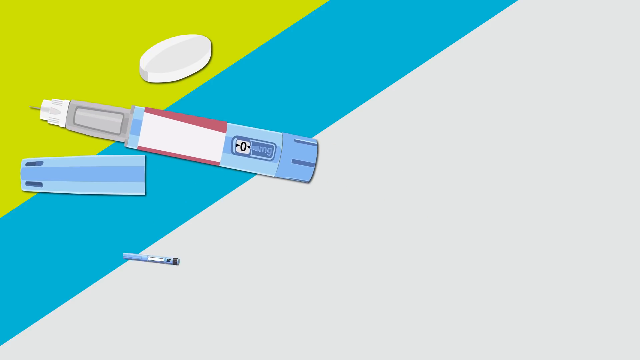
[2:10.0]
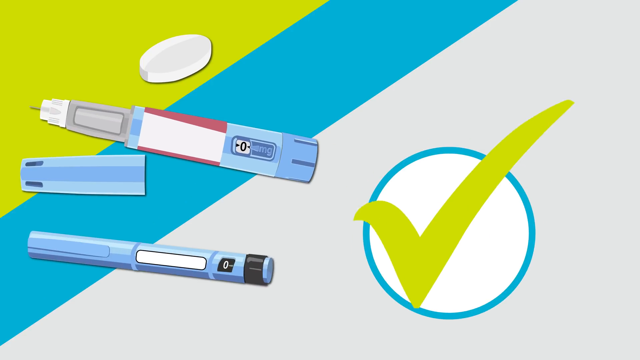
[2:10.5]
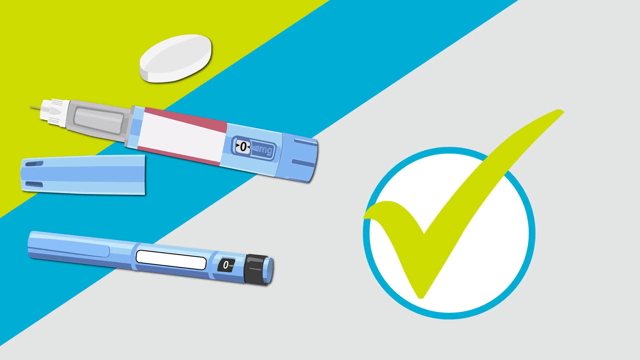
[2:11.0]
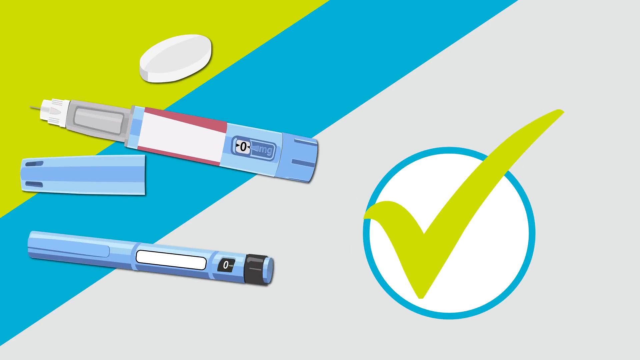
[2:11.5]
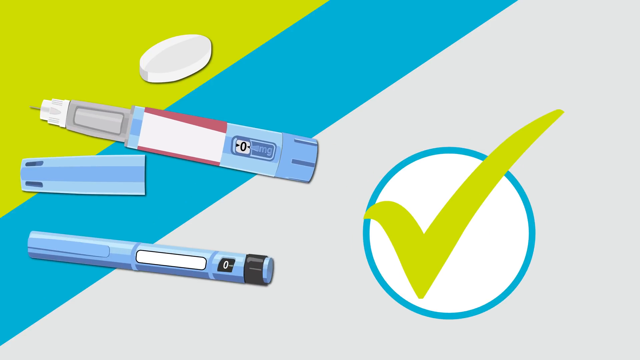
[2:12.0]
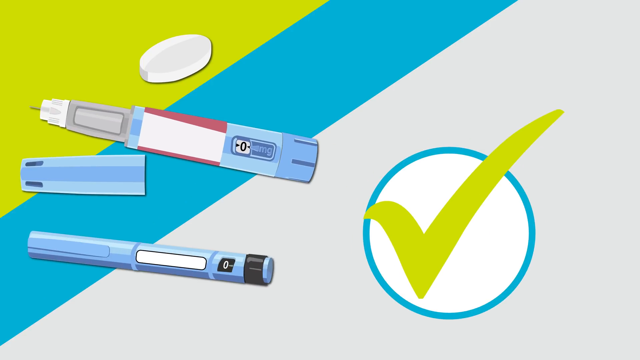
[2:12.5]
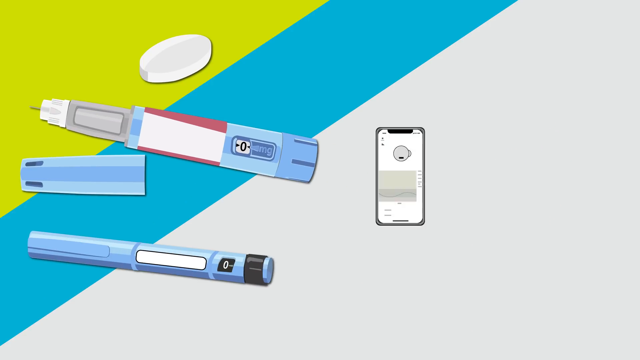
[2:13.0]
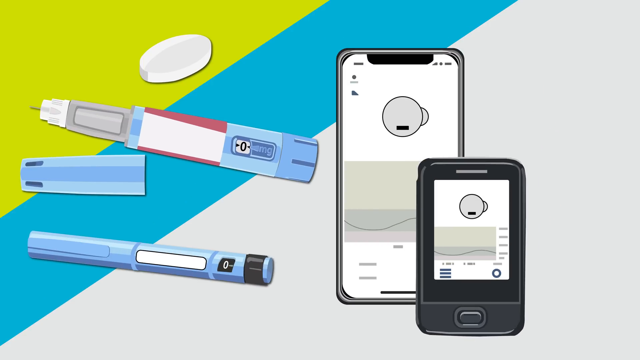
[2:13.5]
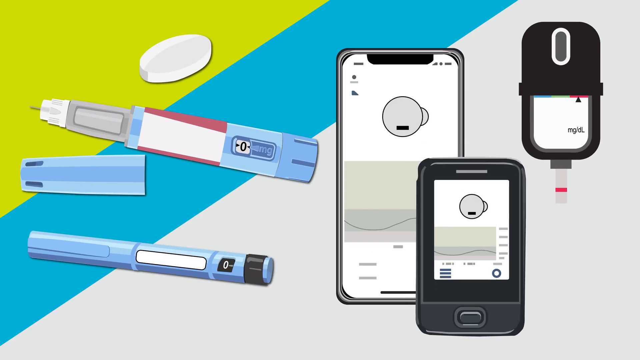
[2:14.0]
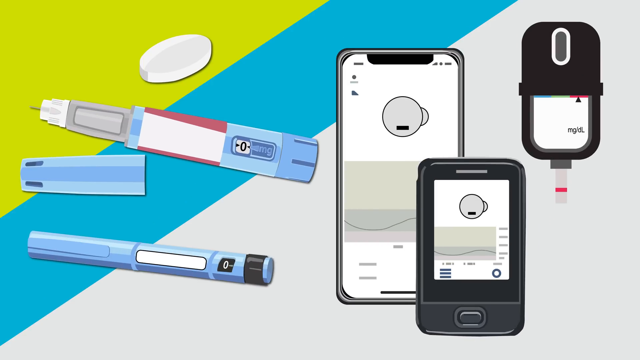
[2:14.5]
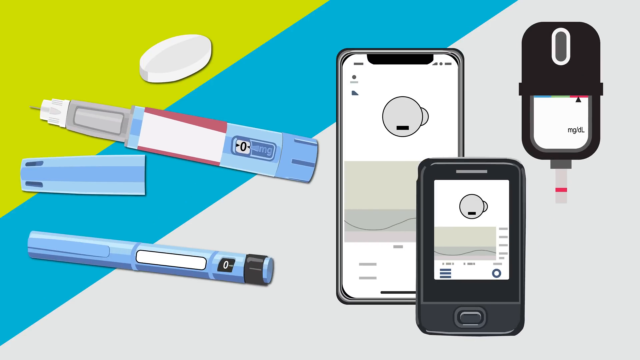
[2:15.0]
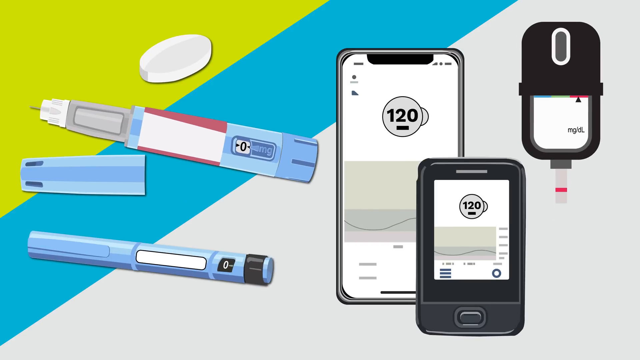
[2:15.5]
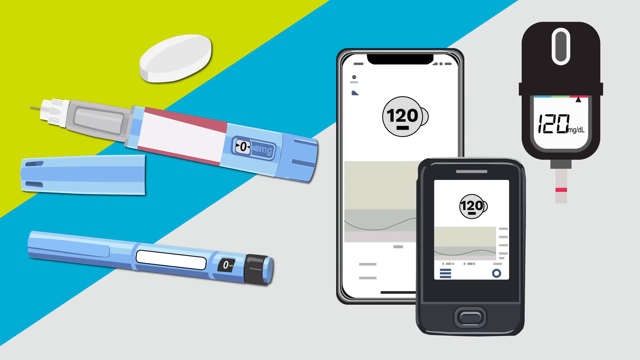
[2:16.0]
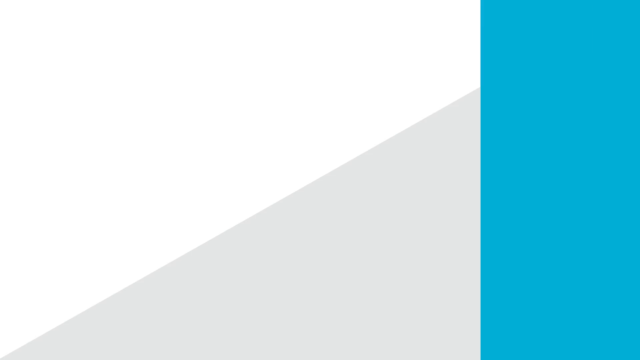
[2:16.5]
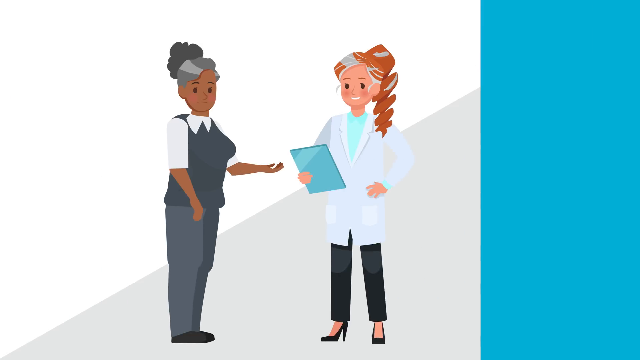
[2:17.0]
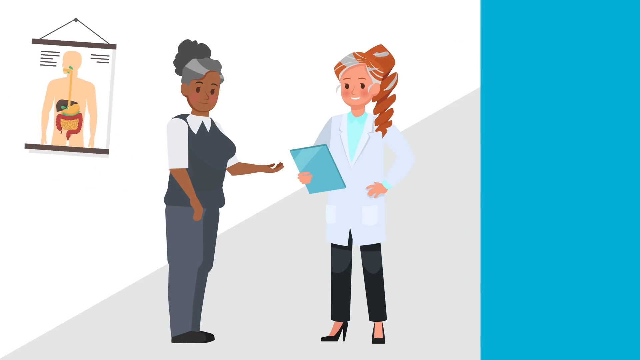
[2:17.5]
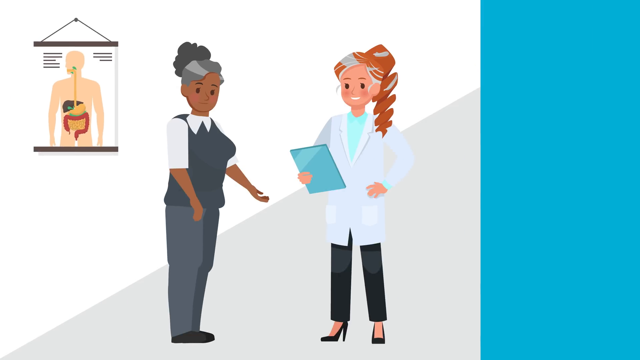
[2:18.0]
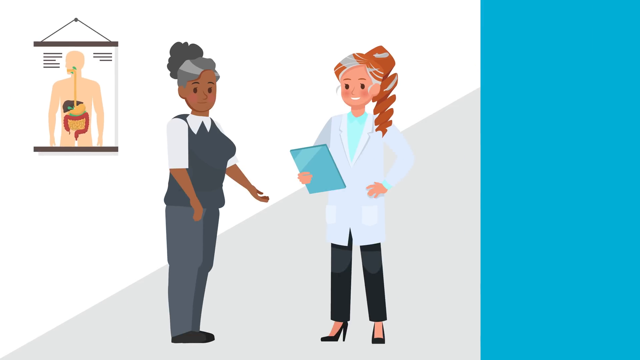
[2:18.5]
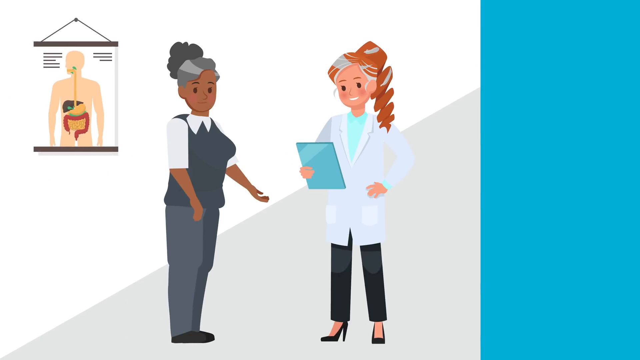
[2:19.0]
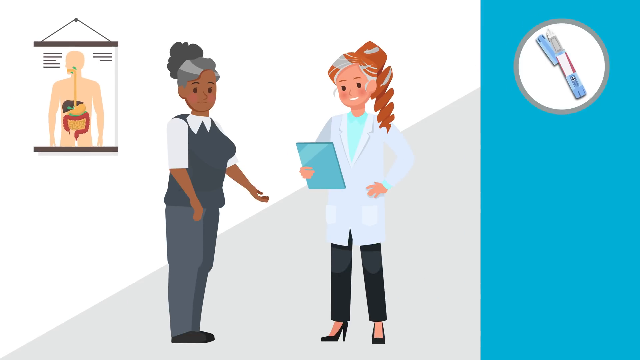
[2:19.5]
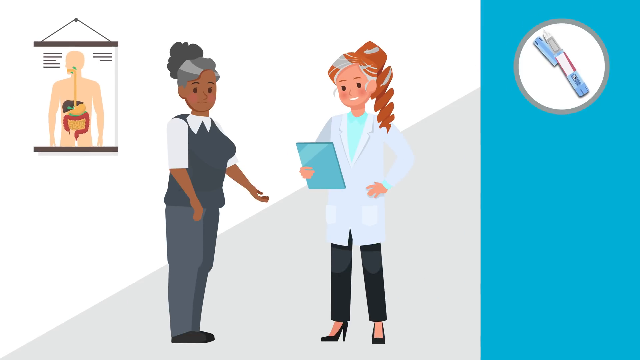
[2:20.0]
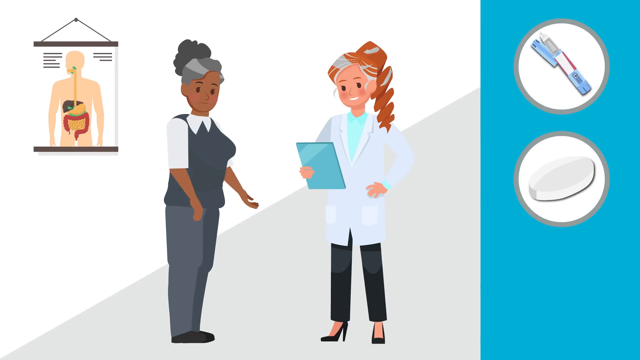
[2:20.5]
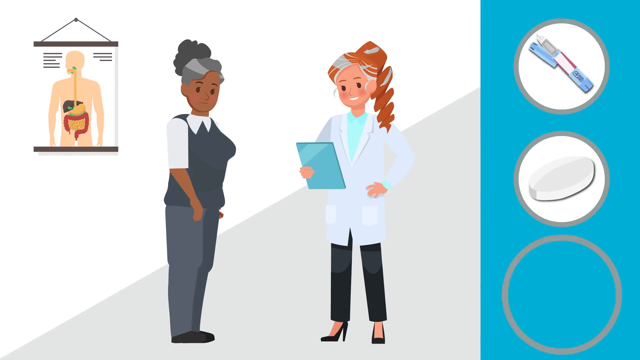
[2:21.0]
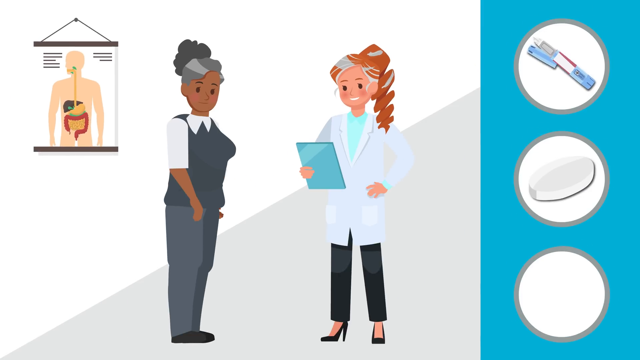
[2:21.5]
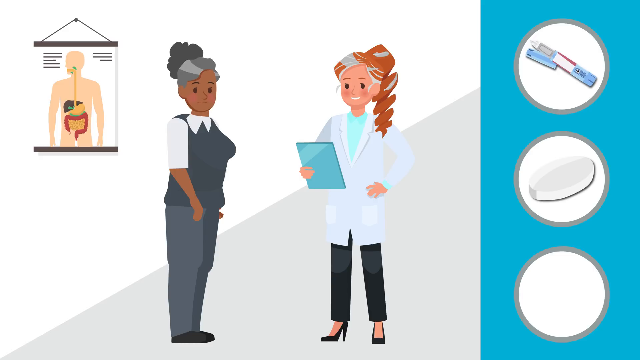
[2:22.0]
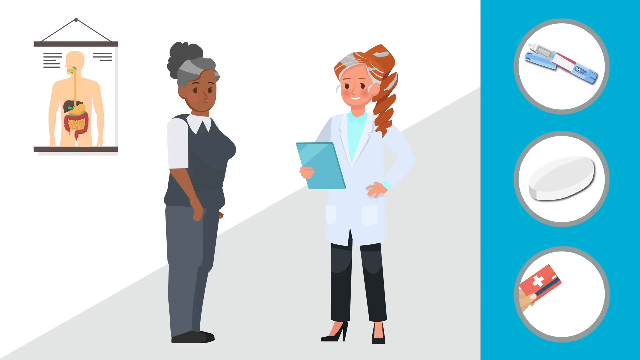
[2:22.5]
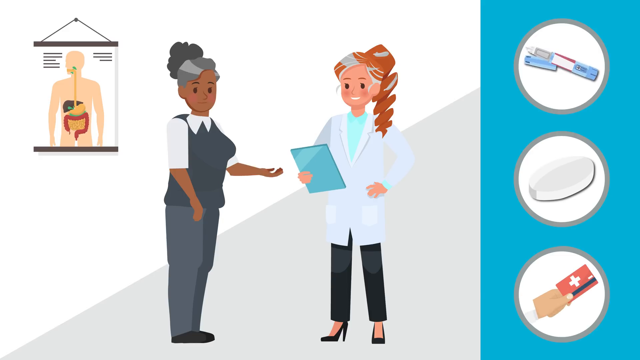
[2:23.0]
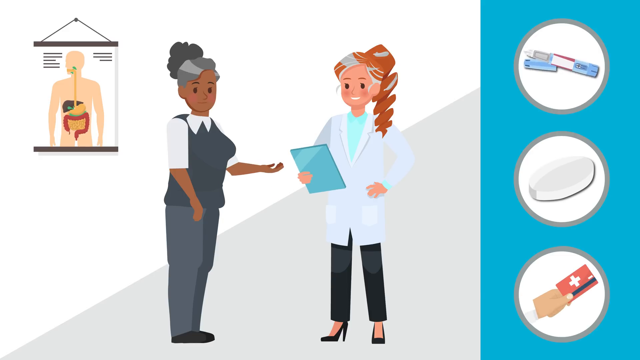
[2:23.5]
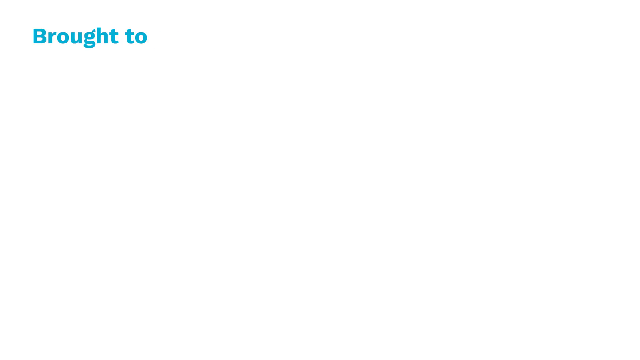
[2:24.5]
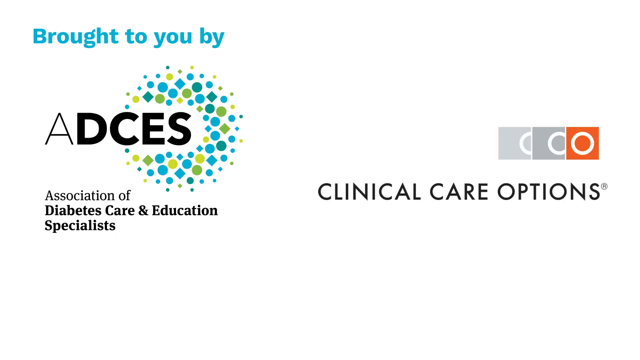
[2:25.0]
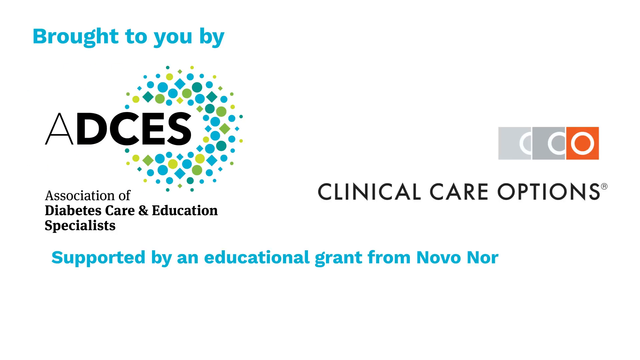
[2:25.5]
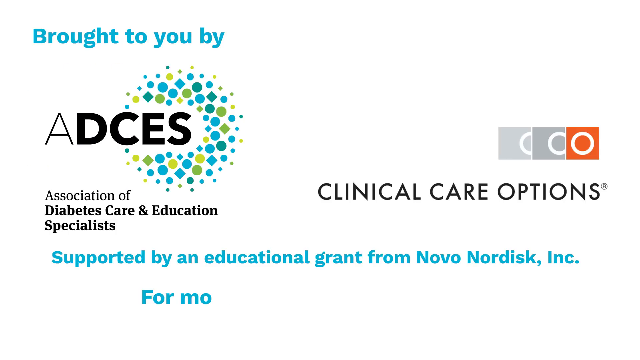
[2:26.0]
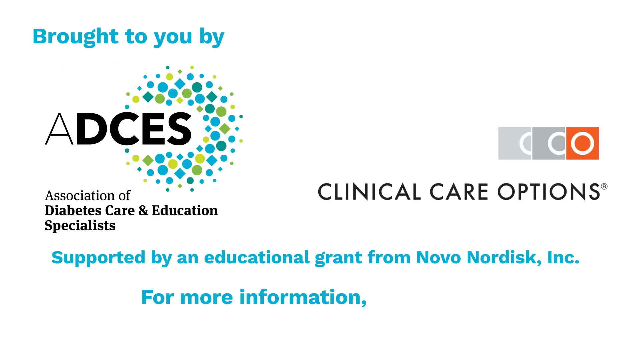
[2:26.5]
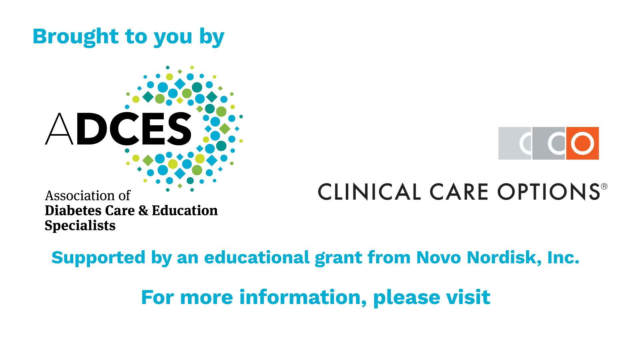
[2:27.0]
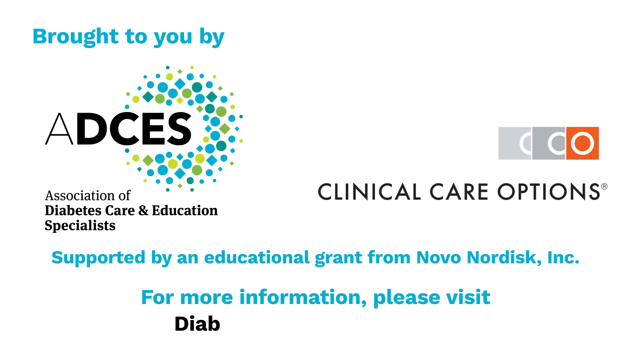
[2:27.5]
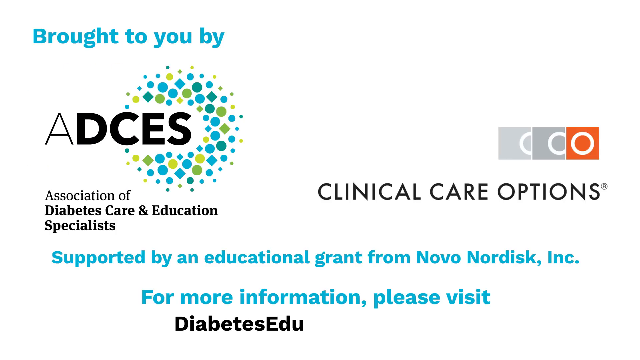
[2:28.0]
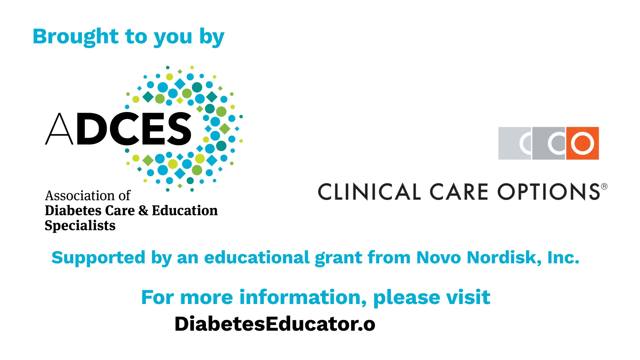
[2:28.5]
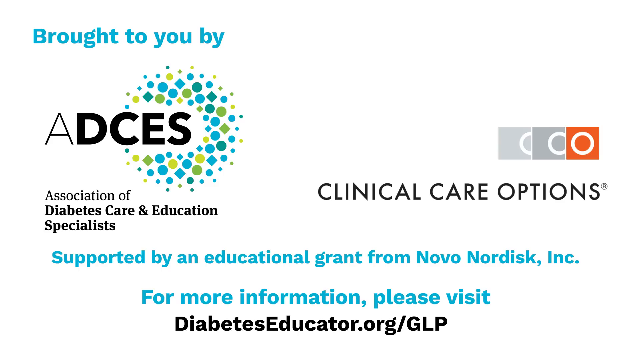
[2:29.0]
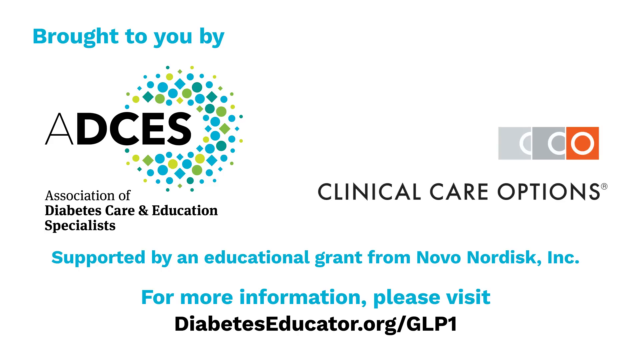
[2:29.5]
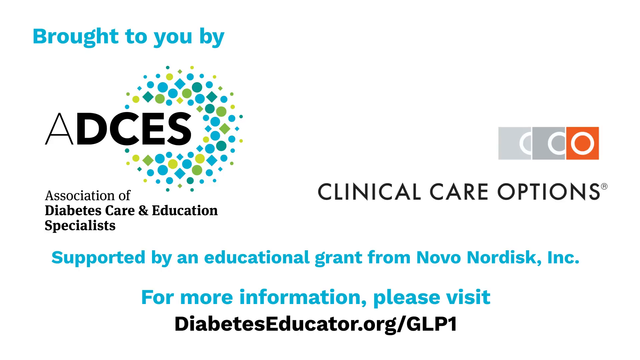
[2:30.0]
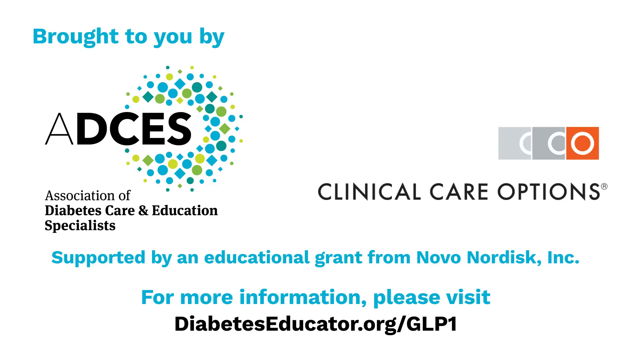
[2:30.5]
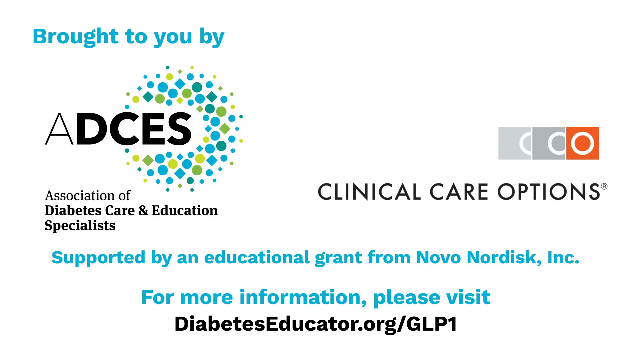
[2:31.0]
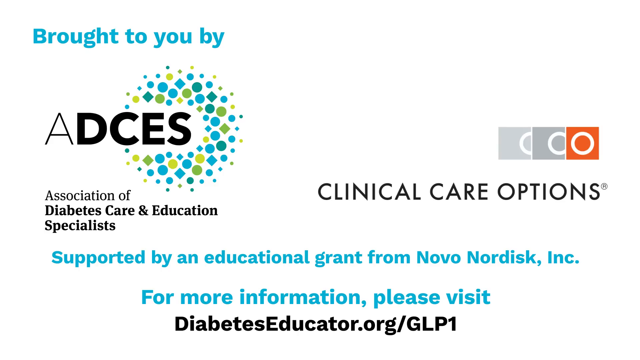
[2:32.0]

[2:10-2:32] A slide with diagonal stripes, green at the top, blue in the center, and white in the back, shows a white pill and the injectables. On the right-hand side is a smartphone, monitor, or other device, presumably monitoring glucose numbers. Another slide follows with a white-gray background and a blue stripe on the side, showing a cartoon of a person talking to their doctor, with pictures of doctors holding a clipboard in the background. Also in the background is a picture of a human with the top cut off, revealing the liver, stomach, and large and small intestines. The last slide reads "Association of Diabetes Care and Education Specialists" and "Clinical Care Options," "supported by an educational grant from Novo Nordisk," with "brought to you by" and more information at the bottom.